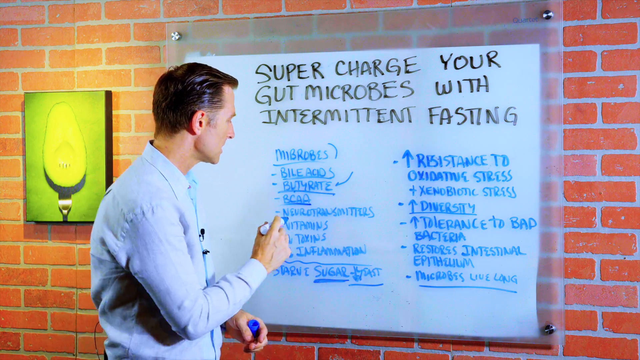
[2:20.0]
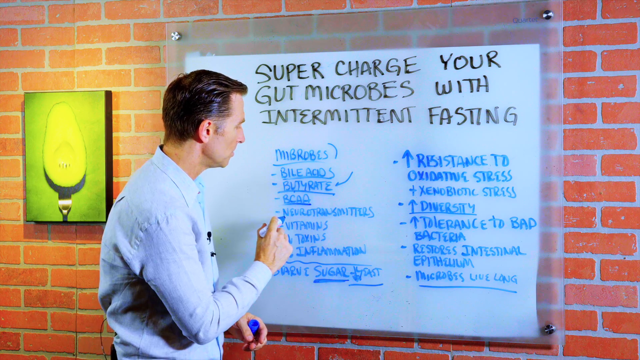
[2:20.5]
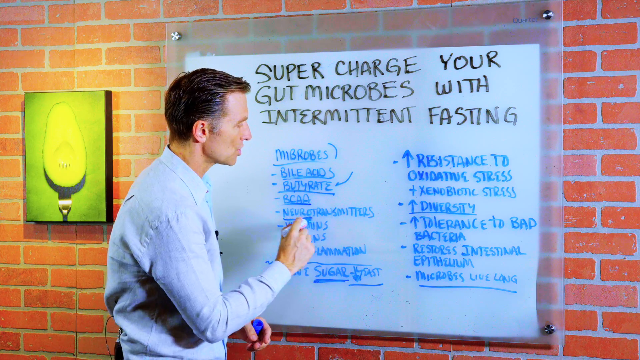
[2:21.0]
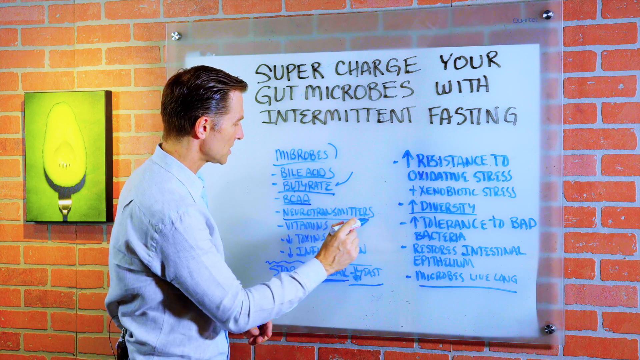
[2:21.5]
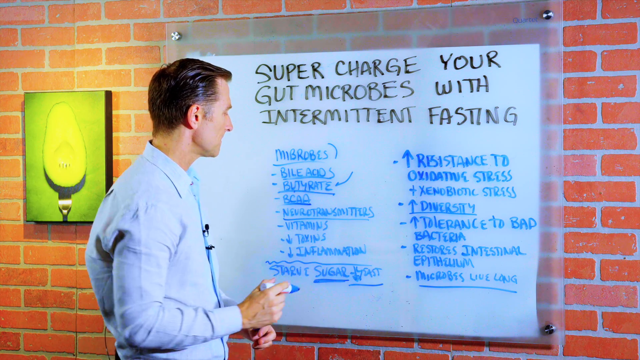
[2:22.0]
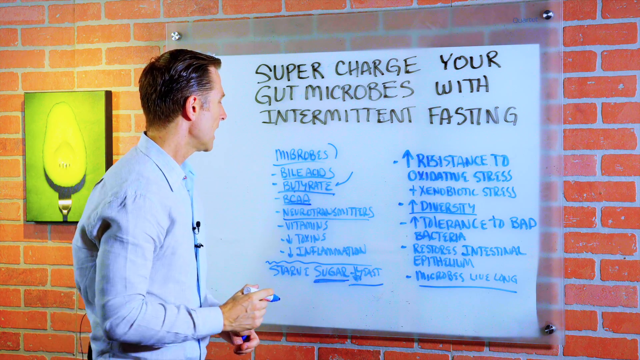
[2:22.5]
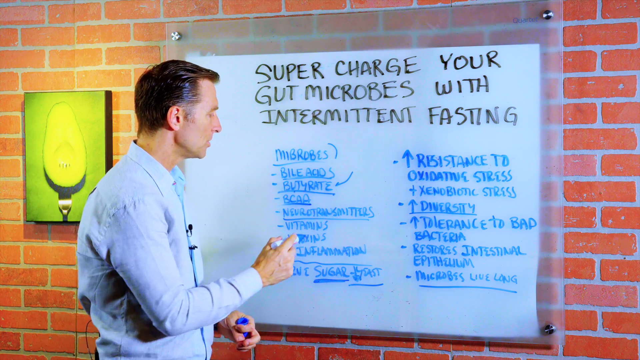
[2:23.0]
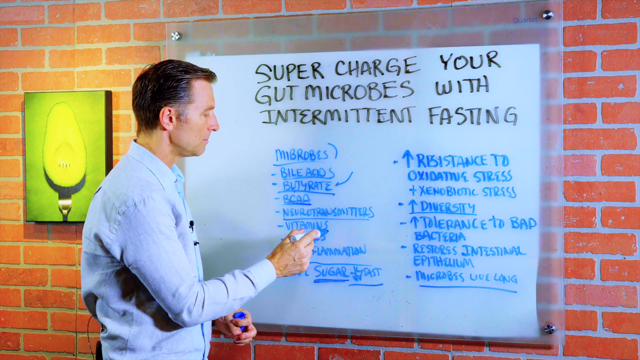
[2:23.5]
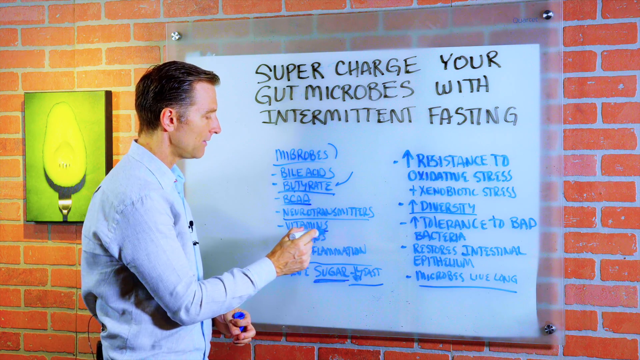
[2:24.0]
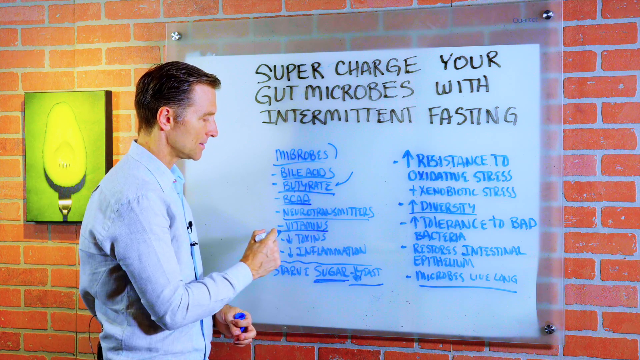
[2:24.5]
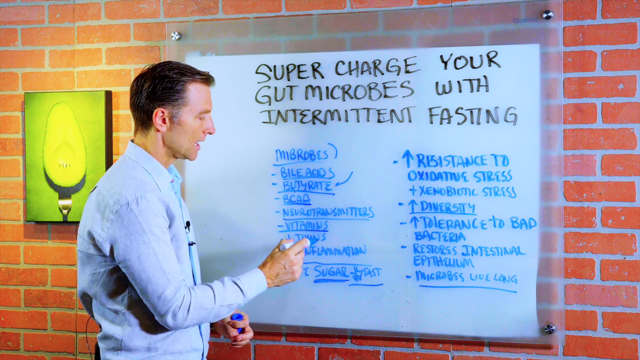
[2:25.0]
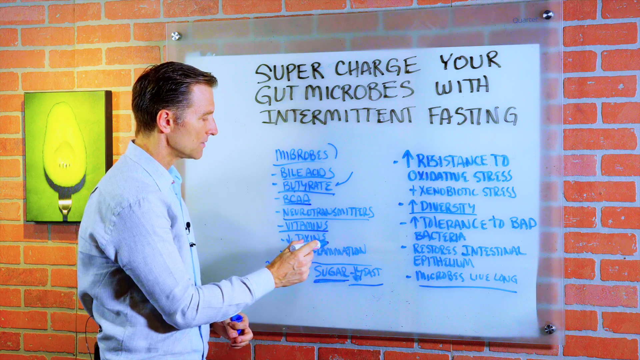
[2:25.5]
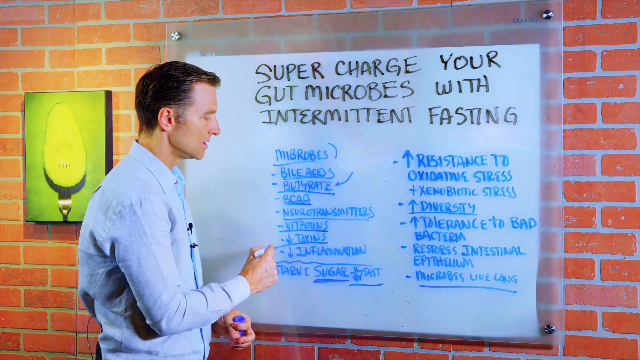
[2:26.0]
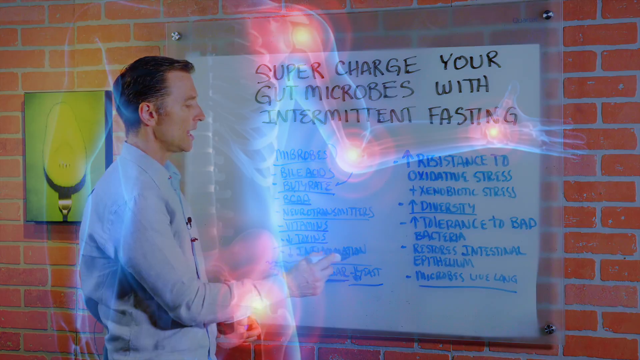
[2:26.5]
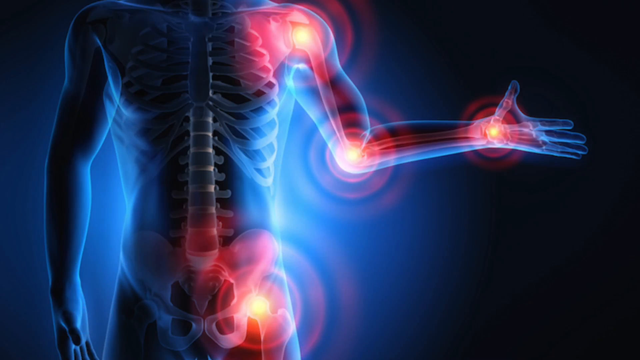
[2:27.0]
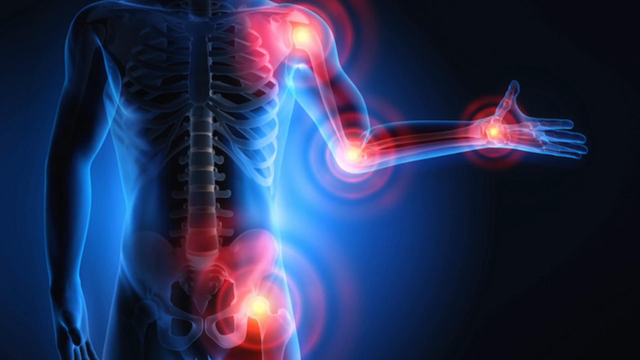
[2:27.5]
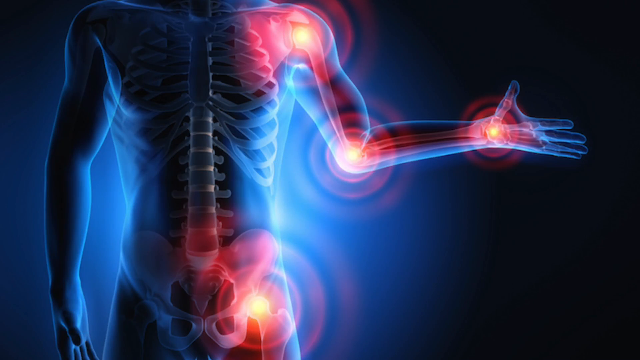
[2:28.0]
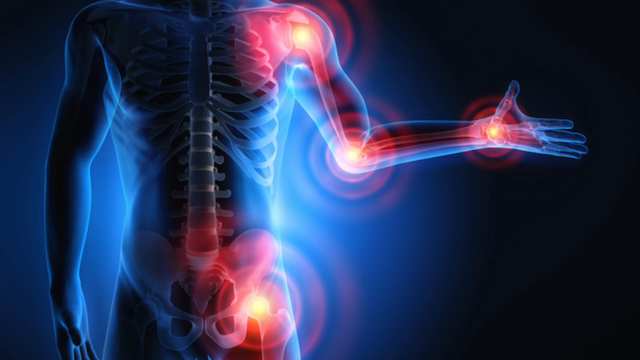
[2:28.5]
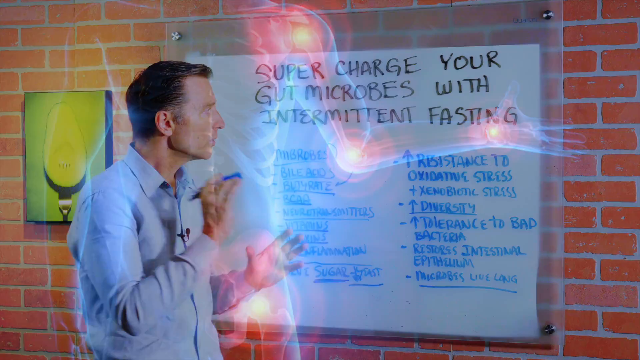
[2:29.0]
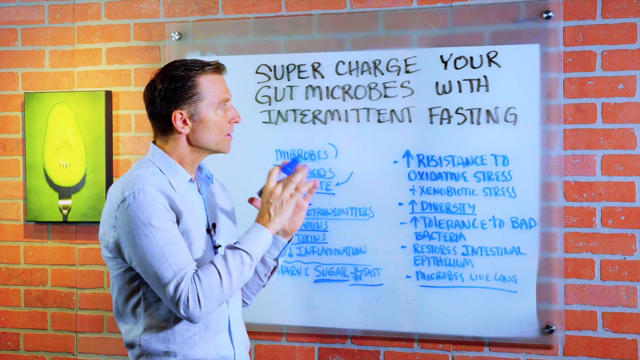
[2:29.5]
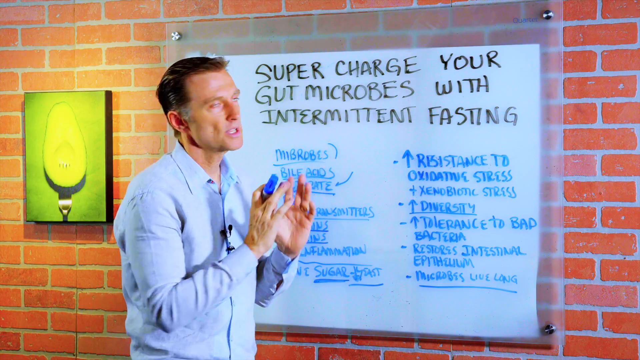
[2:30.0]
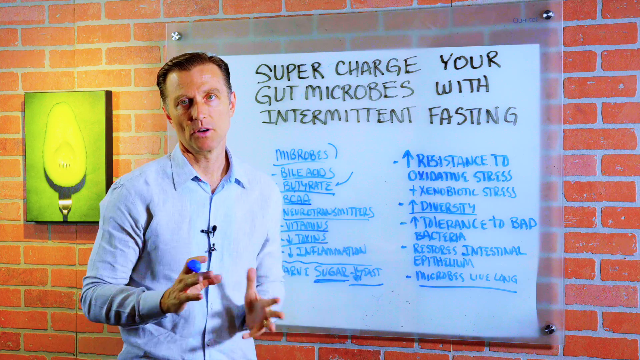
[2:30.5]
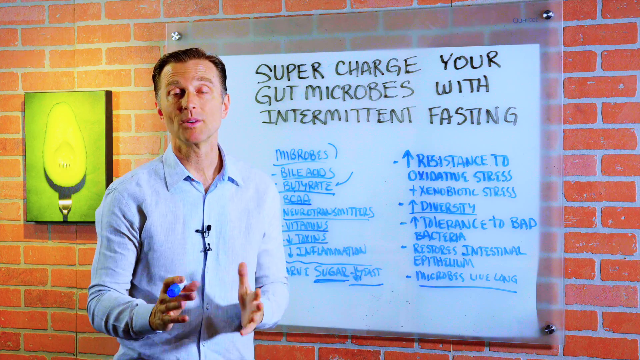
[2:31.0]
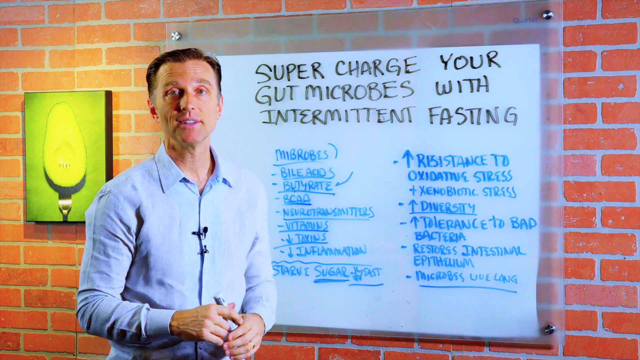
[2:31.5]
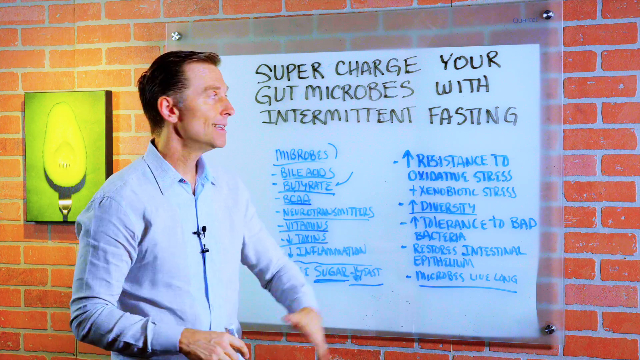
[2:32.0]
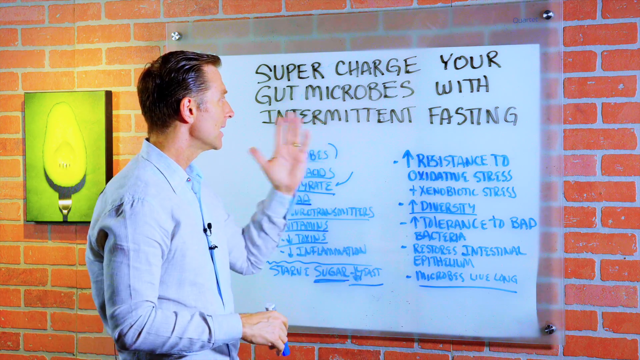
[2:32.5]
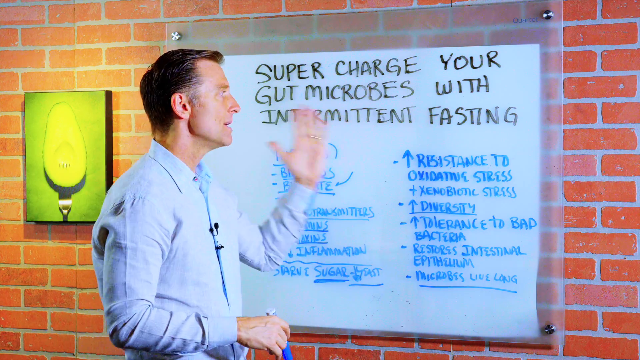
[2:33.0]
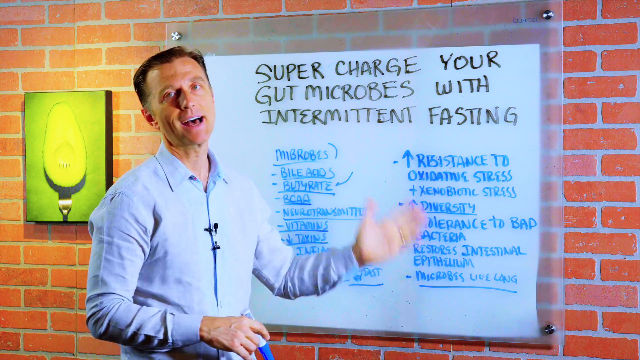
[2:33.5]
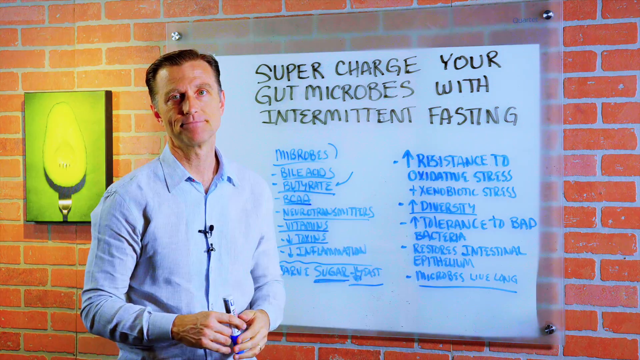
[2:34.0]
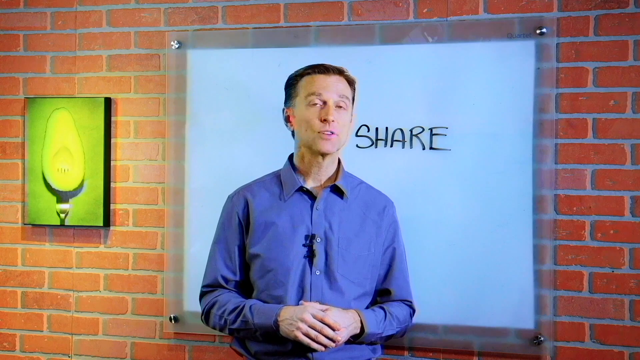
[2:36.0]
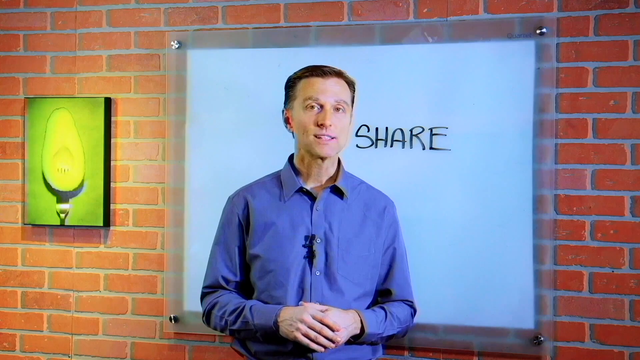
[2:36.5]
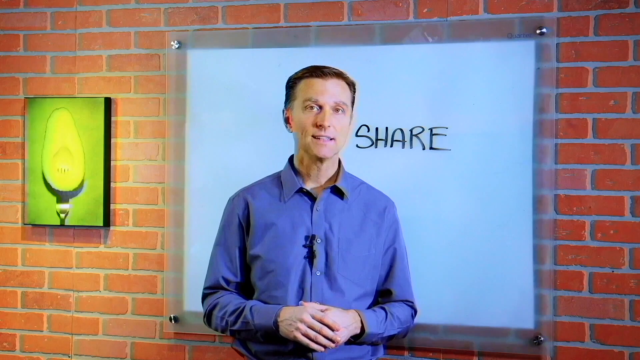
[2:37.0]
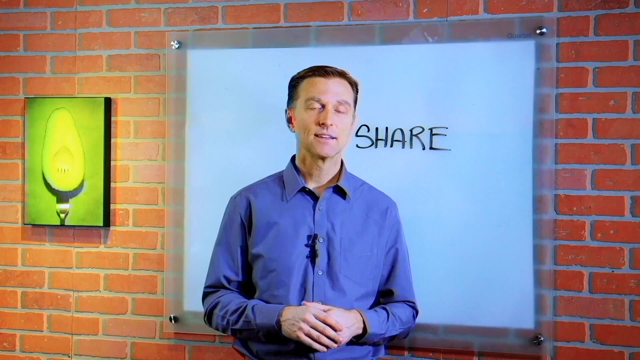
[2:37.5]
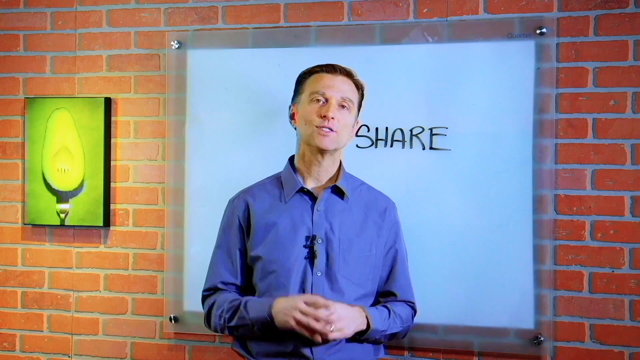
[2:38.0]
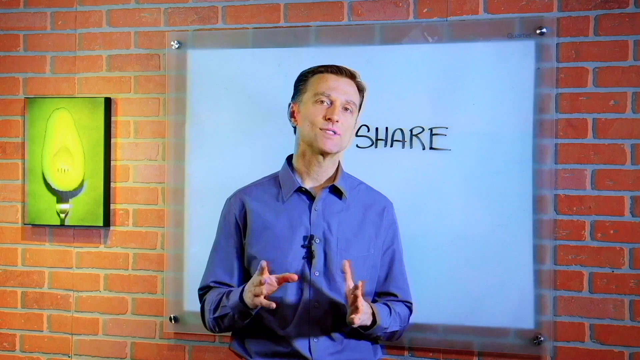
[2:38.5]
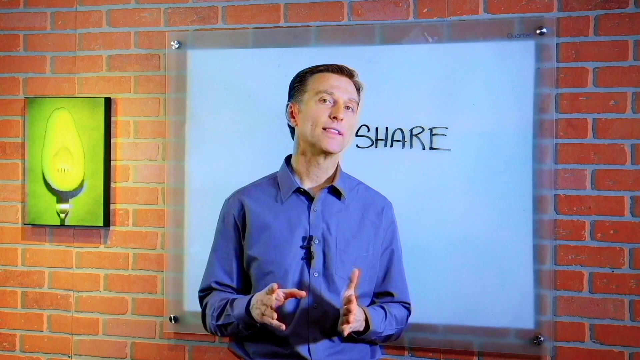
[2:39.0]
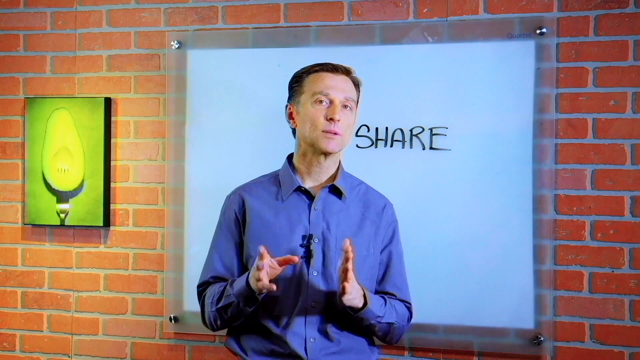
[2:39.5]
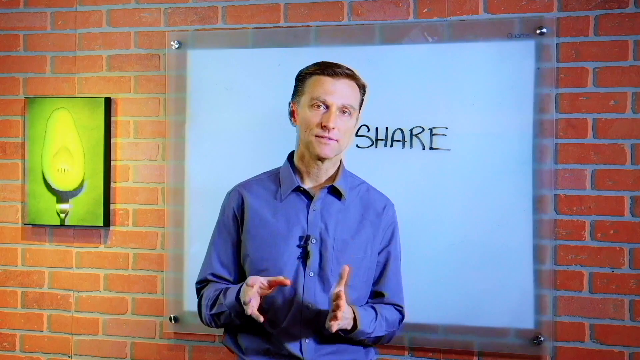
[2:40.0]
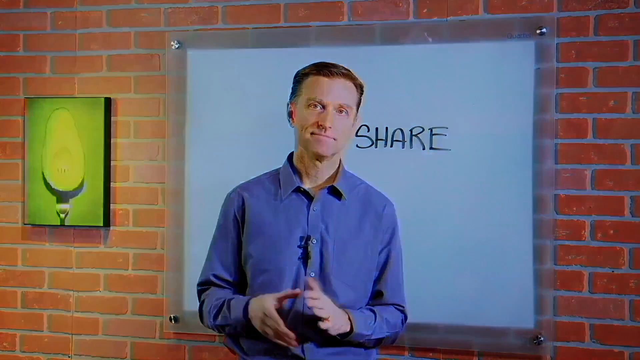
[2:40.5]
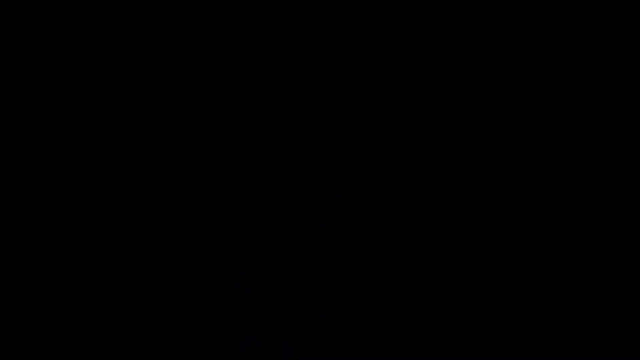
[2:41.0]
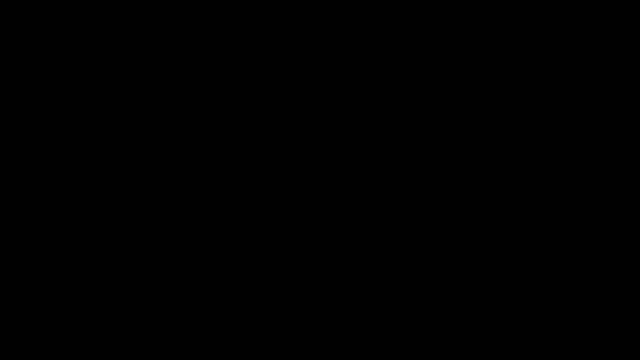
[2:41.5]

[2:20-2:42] A man in a pale blue shirt stands in front of a whiteboard attached to a wall of reddish orange bricks. The board has a header in black capital letters reading "supercharge your gut microbes with intermittent fasting," and below it, in smaller blue text, are two columns that look like bulleted lists. He holds a felt marker with a white body and blue tip and uses it to underline about three words in the left column. Next comes an illustration of a human body viewed from the shoulders to the pelvic region. Some parts are highlighted with reddish concentric circles: the shoulder, the elbow, the wrist, and the hip. The highlighted figure has one elbow bent with the hand stretched out horizontally from the elbow, while the other hand rests by the side. The illustration is deep blue with the human form outlined in lighter blue, and the spinal cord and rib bones are visible. The screen transitions back to the man, still speaking as he gestures towards the board. Then he appears again, still speaking, this time in a deeper blue shirt; the whiteboard is now empty except for the word "share" written in black.